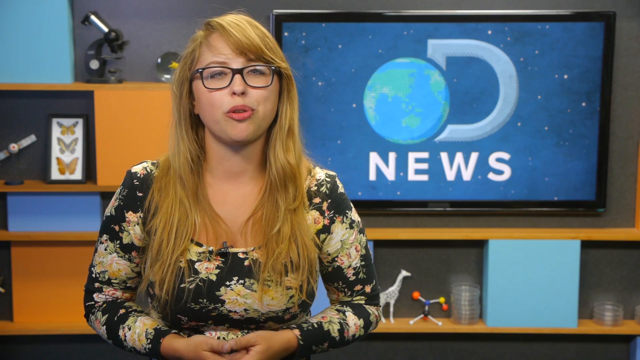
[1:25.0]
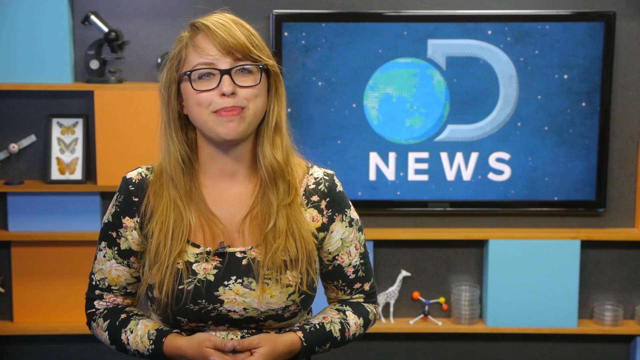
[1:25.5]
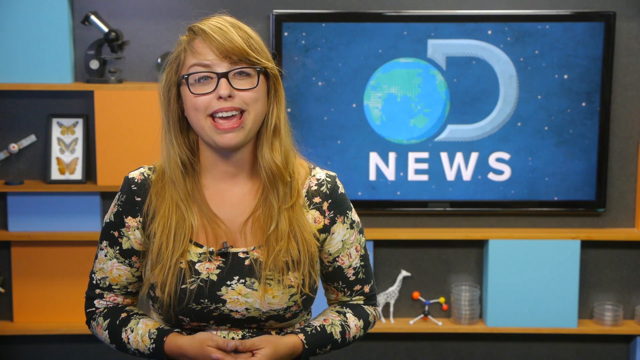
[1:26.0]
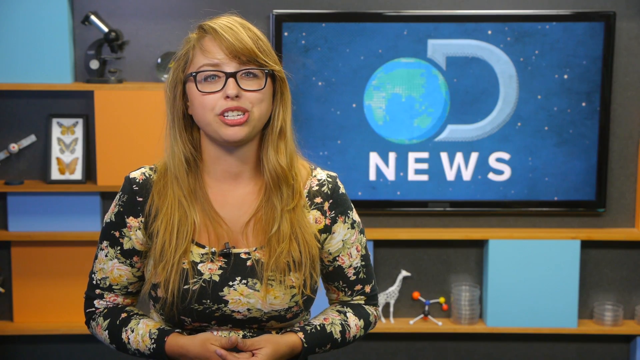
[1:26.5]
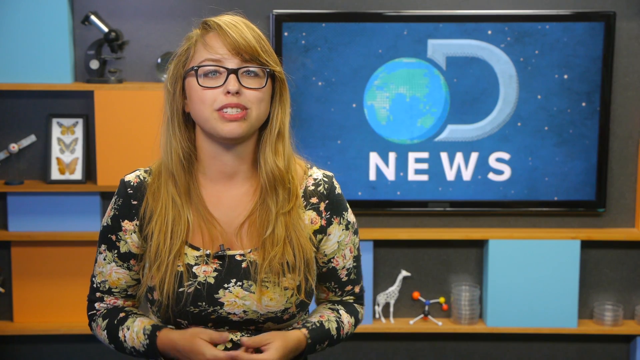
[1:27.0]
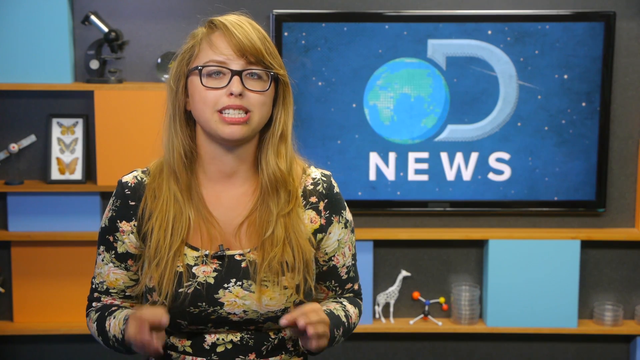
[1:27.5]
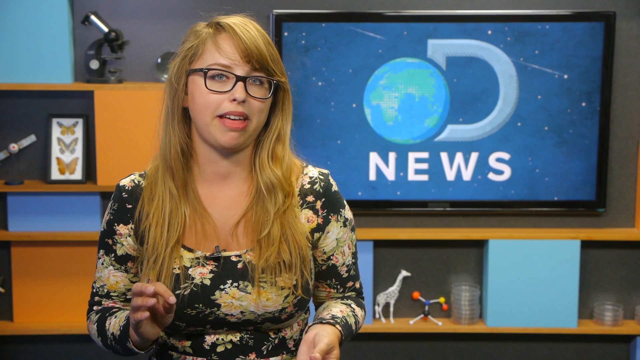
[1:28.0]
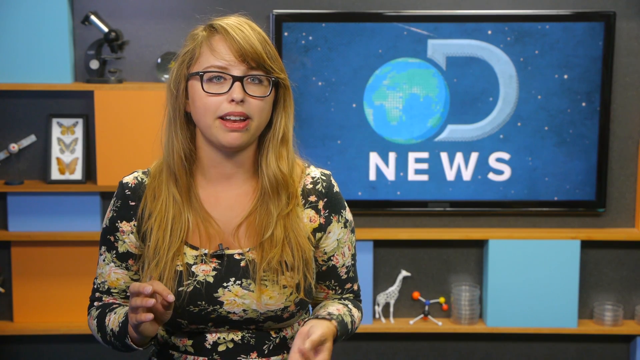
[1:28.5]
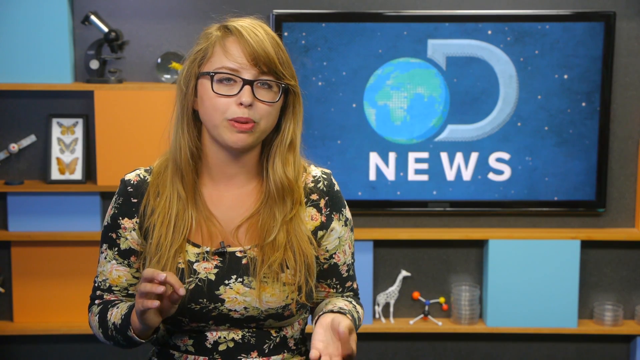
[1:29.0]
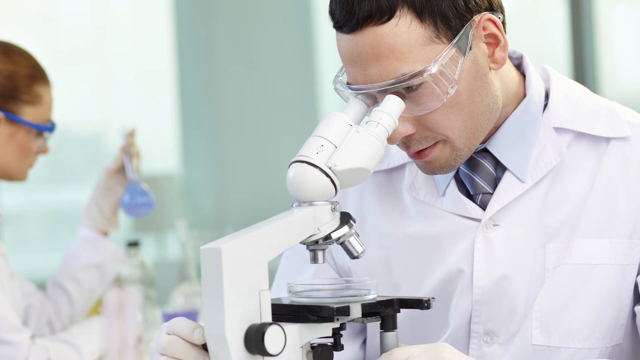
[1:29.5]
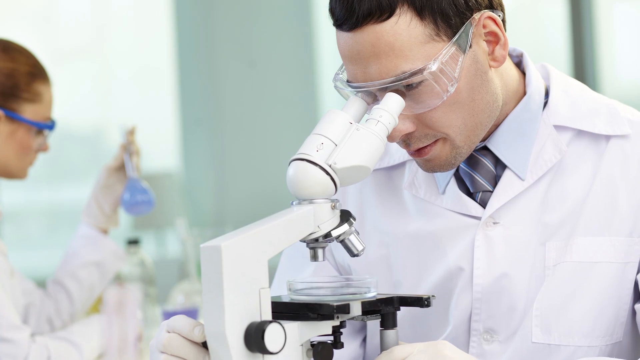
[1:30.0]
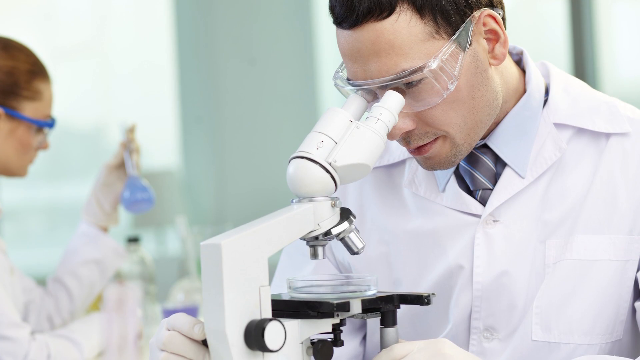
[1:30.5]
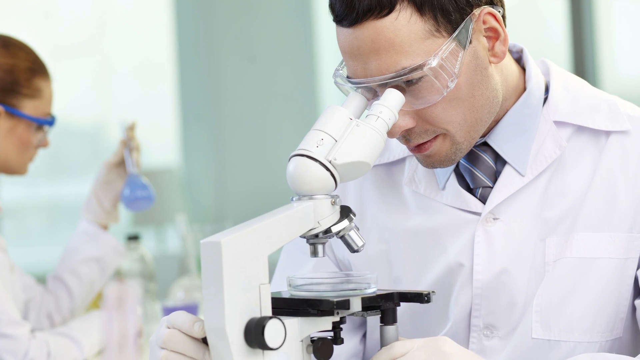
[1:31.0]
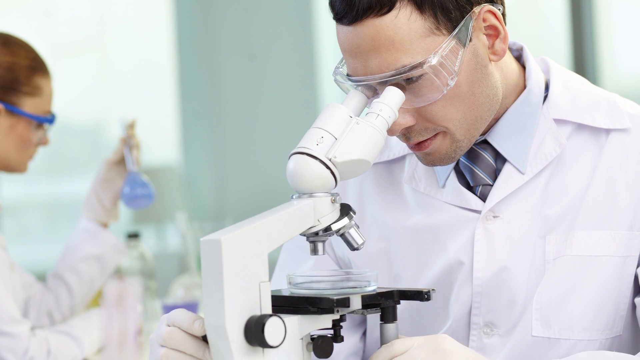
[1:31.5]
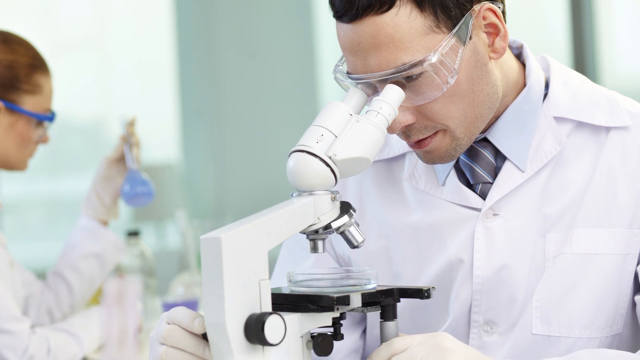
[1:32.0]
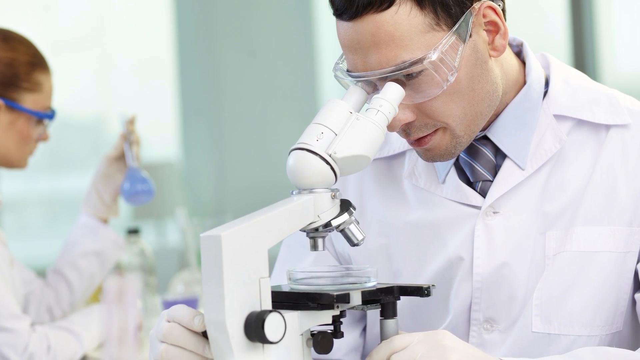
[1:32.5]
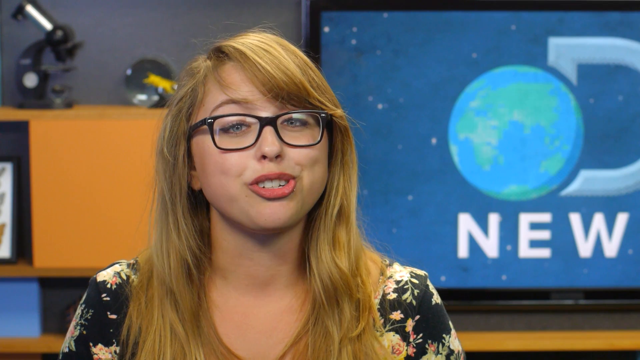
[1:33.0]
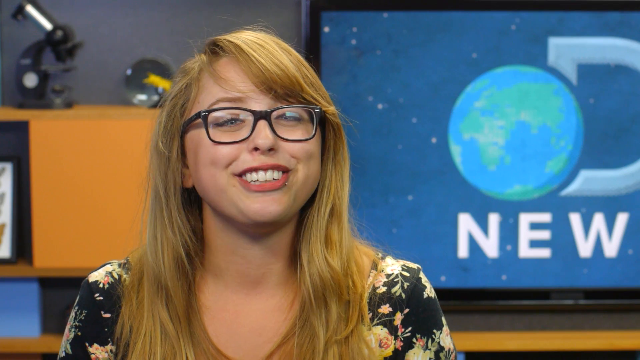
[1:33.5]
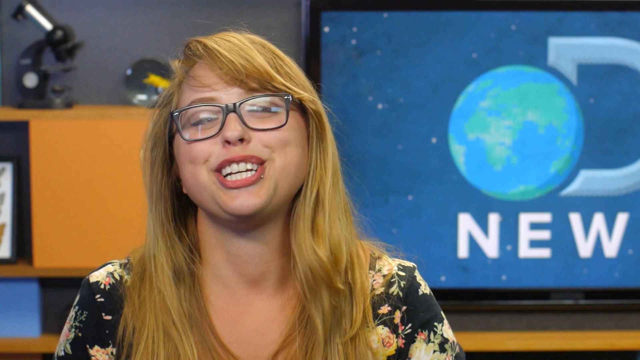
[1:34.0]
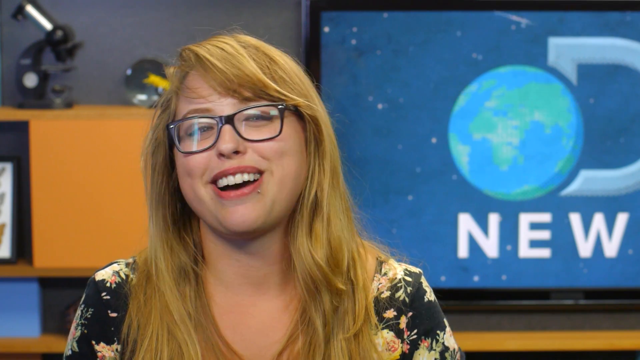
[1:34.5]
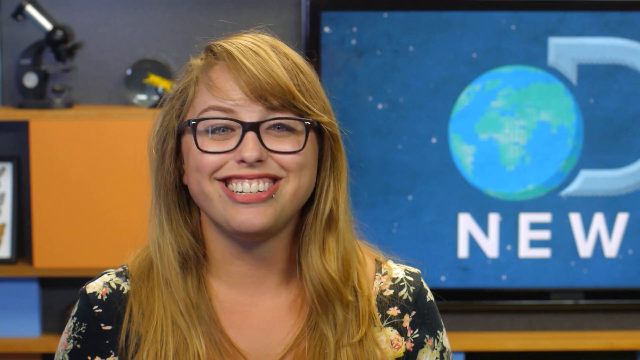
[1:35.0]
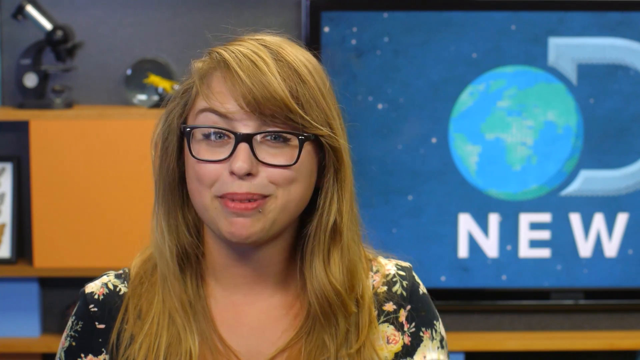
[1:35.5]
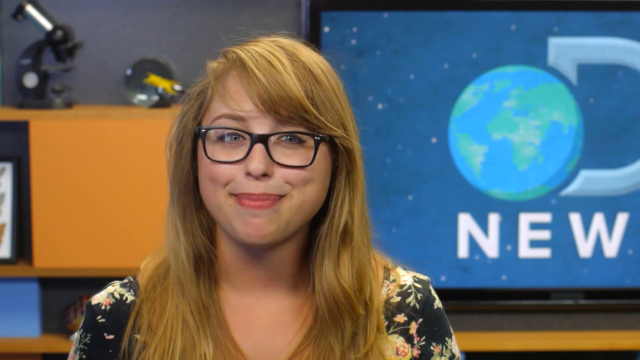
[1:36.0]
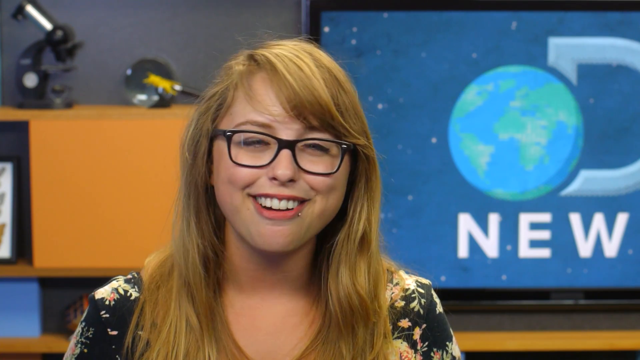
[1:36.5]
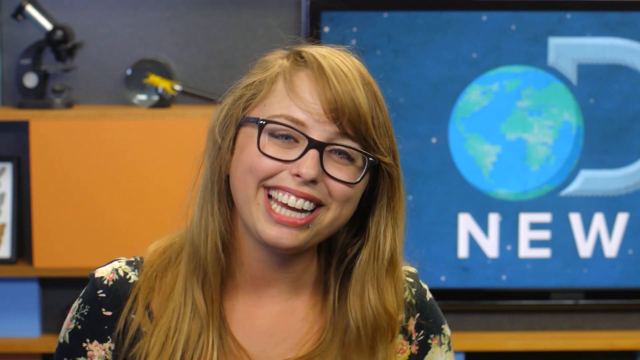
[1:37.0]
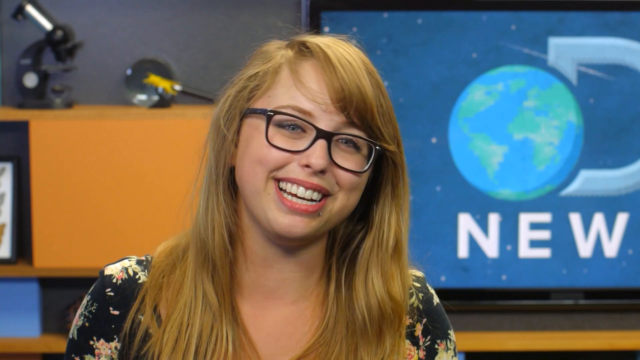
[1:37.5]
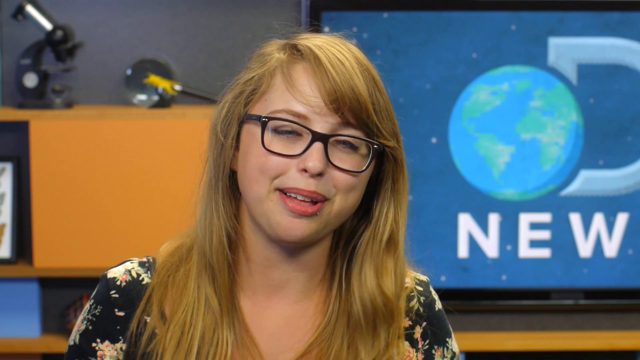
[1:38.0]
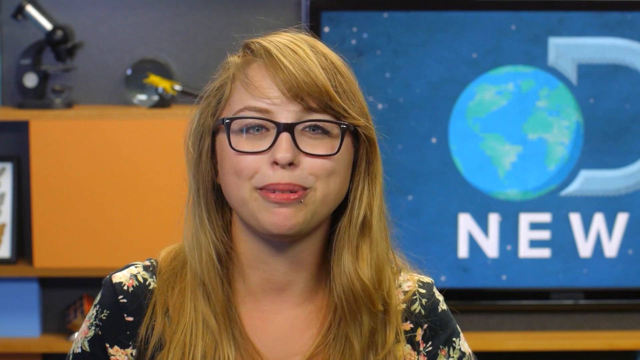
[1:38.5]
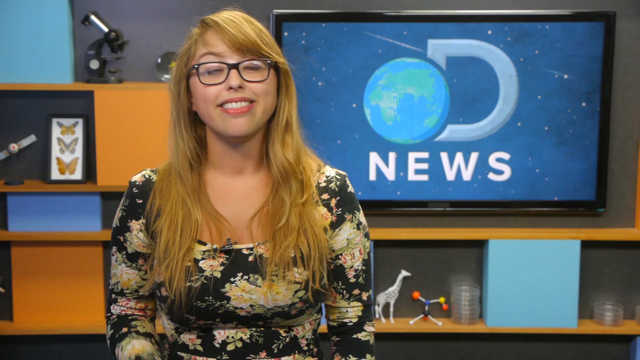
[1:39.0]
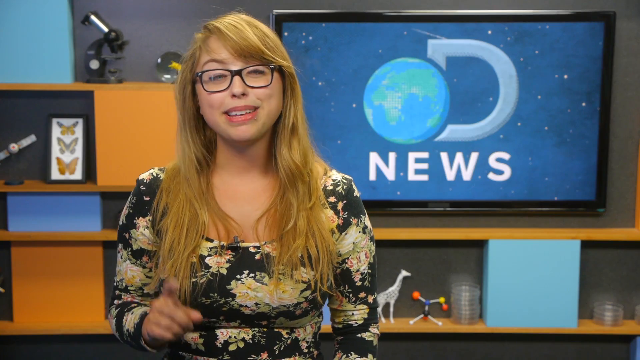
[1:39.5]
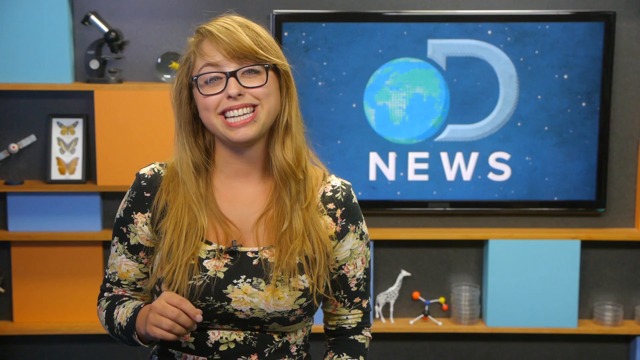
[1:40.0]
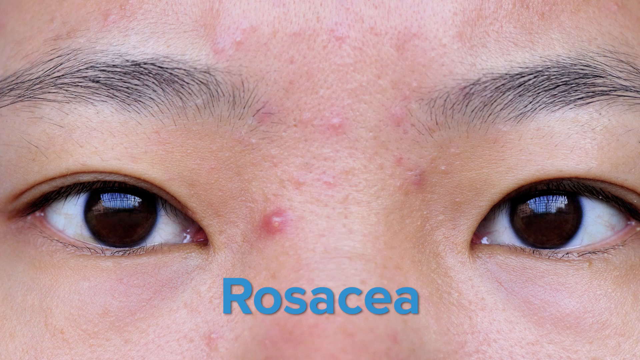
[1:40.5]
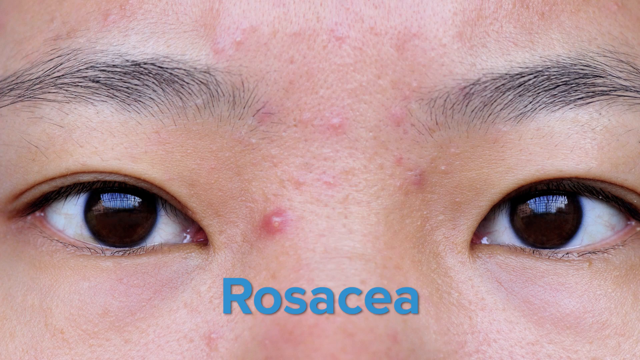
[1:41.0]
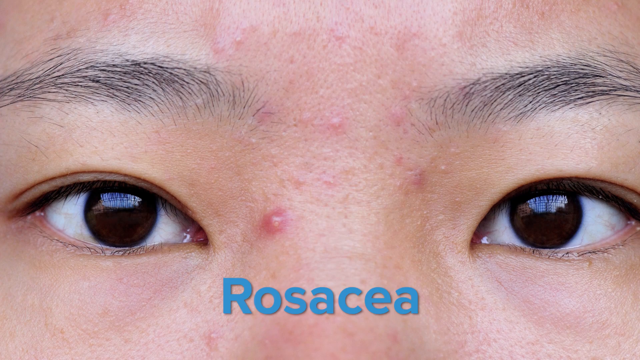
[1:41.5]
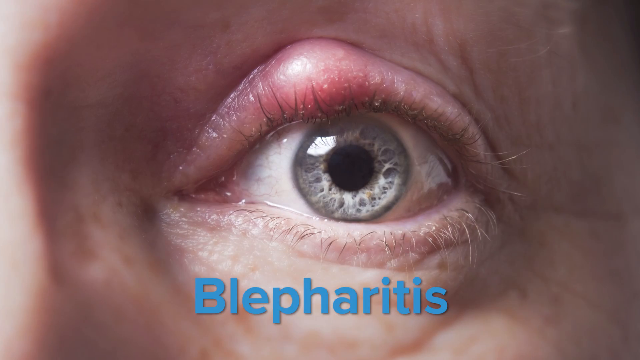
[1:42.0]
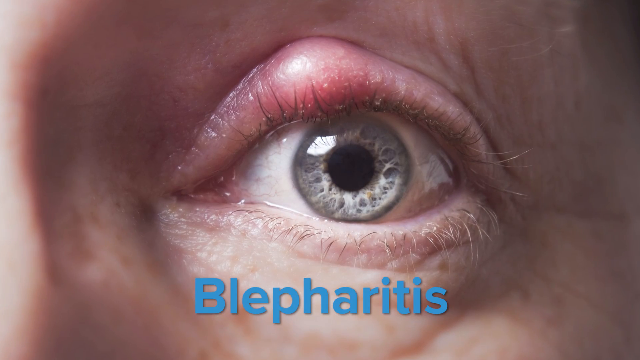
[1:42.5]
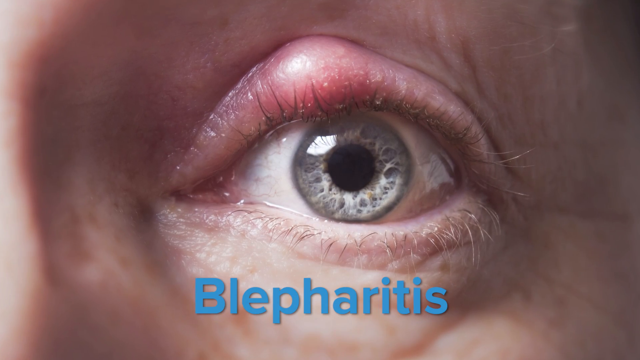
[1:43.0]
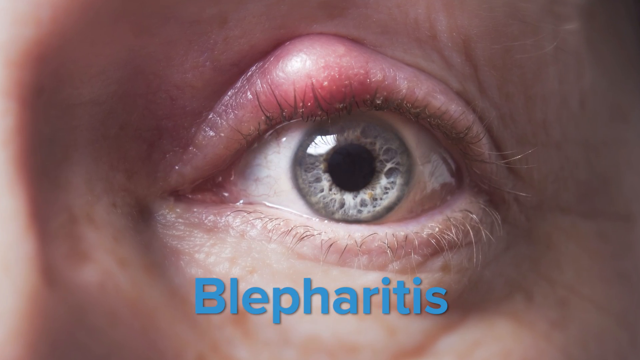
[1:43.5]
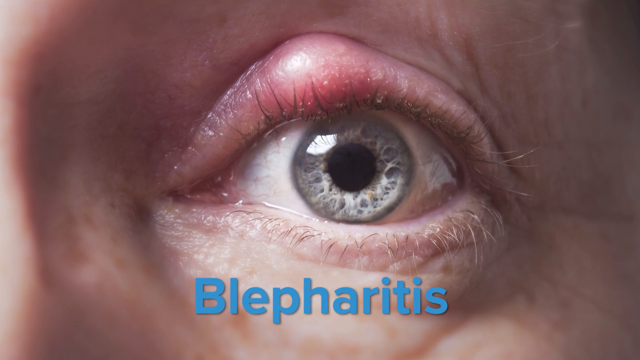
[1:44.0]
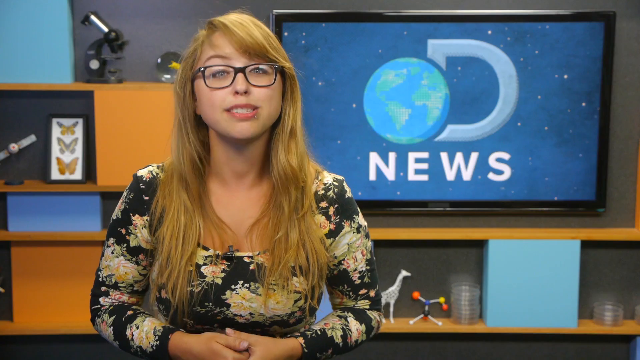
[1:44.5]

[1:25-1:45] From the studio with an animated Laci, the video moves to a laboratory with a young man in a white lab jacket and a blue collared shirt, wearing clear eye protection glasses or goggles. He has brown hair, is of European descent, and looks to be in his very early 30s. There is a white microscope with a Petri dish on what seems to be its base. In the background a woman holds a flask up; she wears a rubber glove on her left hand, and her red hair appears to be pulled back, with only the front and side of her head visible. Next is a close-up of a person of Asian descent showing their eyes, the bridge of their nose and their eyebrows, with a skin condition in the middle of the bridge of the nose that looks like a pimple, and the text says "rosacea". Then a person with gray eyes is shown with what looks like a skin disorder on the top eyelid, a bump underneath the lid, and the text apparently says "blepharitis". The video returns to the studio with Laci, who is a little less animated now.